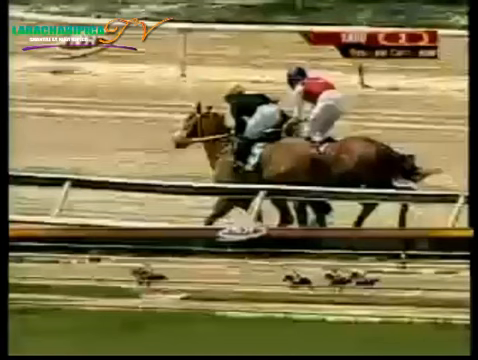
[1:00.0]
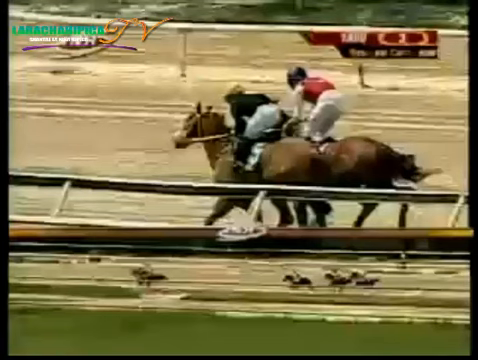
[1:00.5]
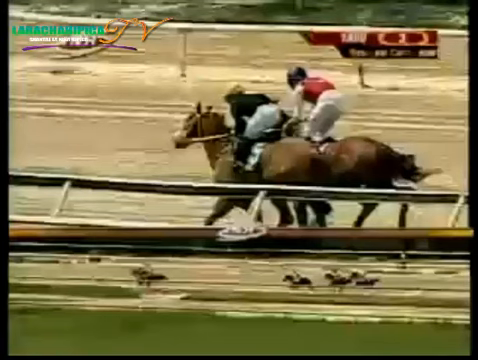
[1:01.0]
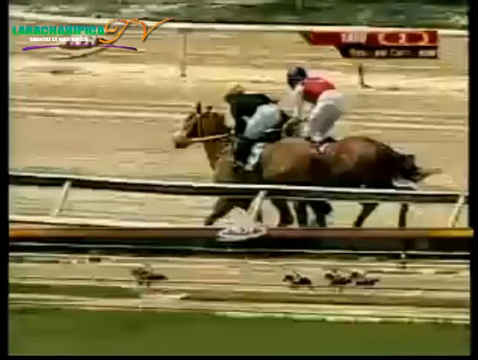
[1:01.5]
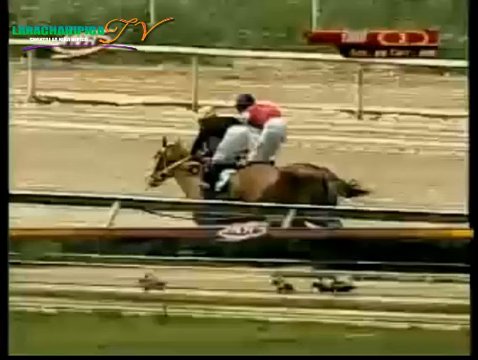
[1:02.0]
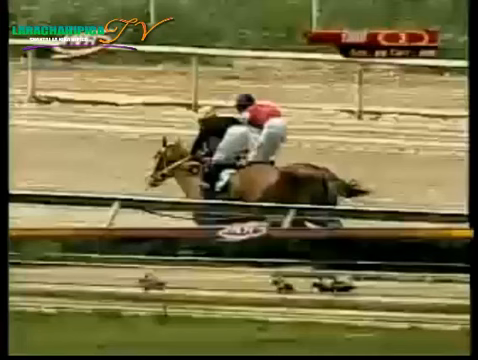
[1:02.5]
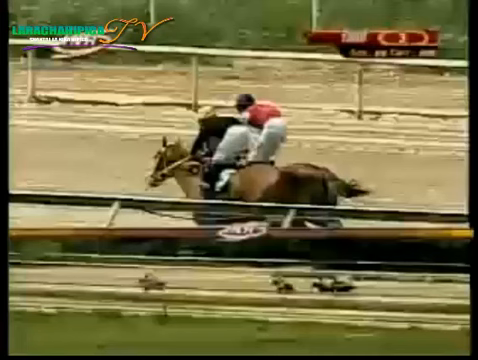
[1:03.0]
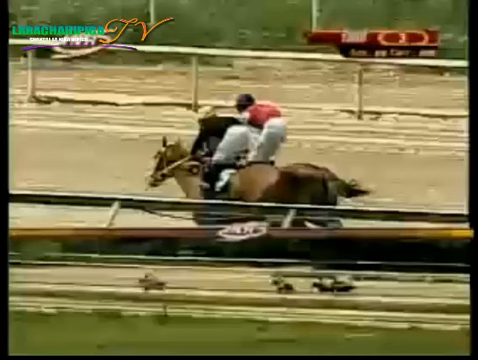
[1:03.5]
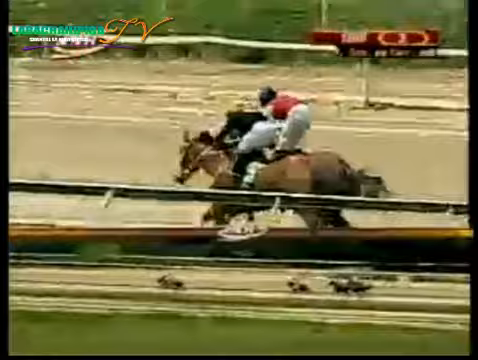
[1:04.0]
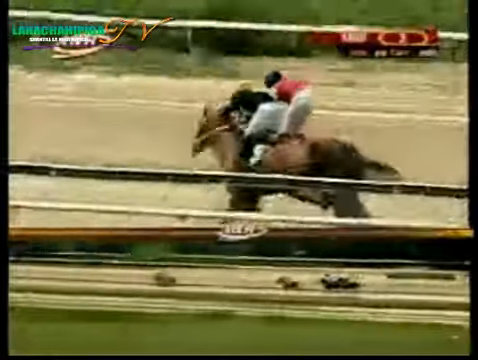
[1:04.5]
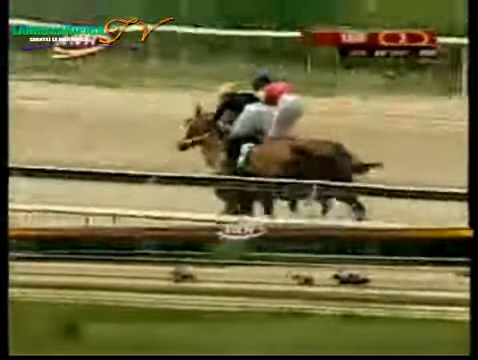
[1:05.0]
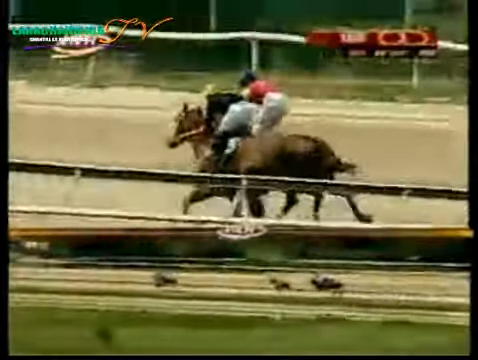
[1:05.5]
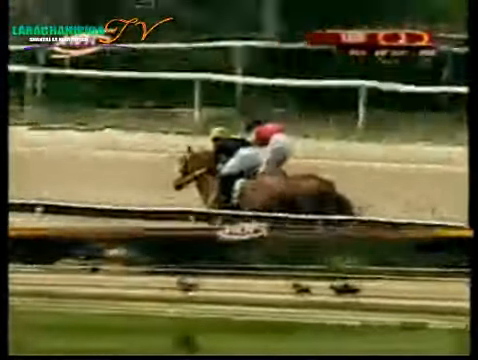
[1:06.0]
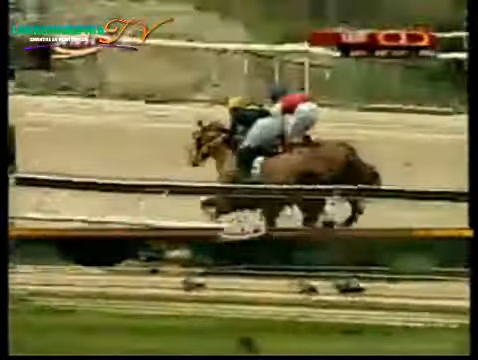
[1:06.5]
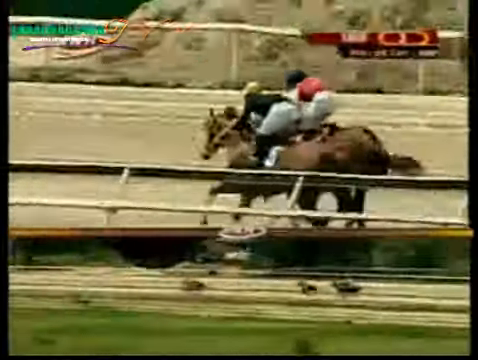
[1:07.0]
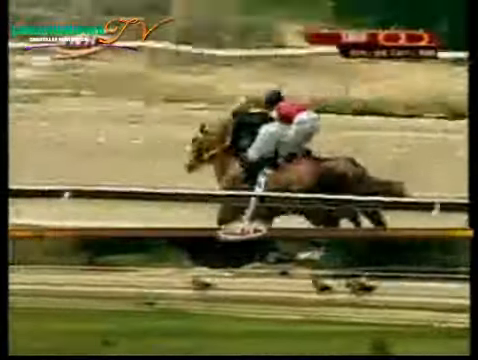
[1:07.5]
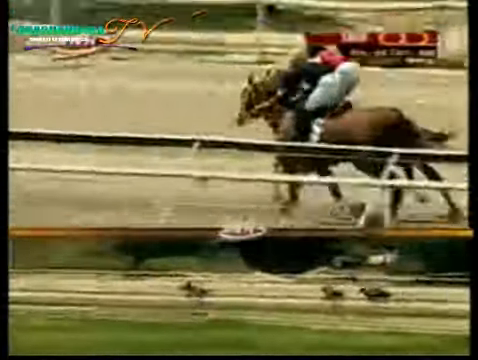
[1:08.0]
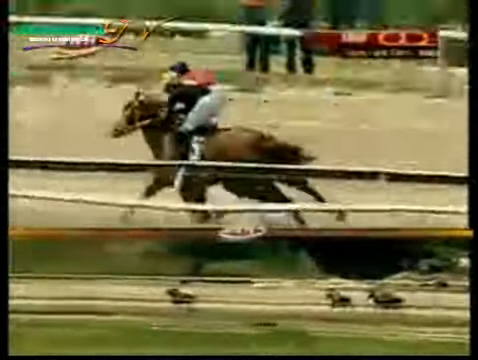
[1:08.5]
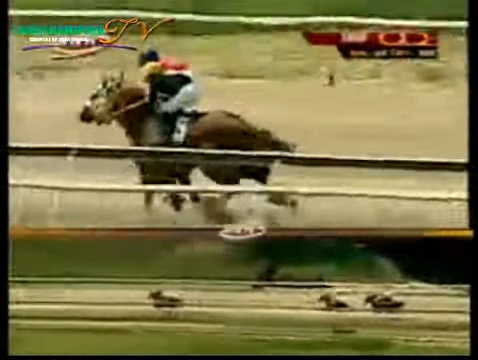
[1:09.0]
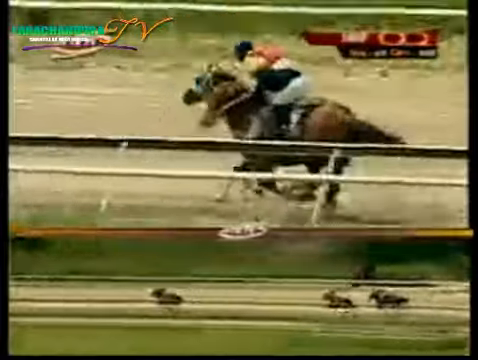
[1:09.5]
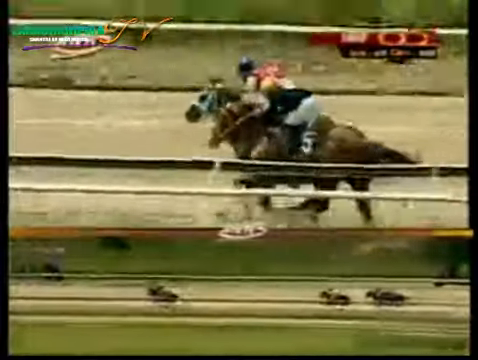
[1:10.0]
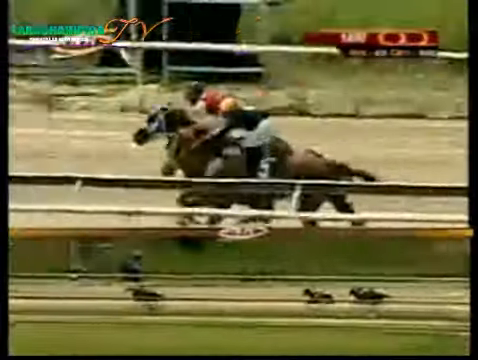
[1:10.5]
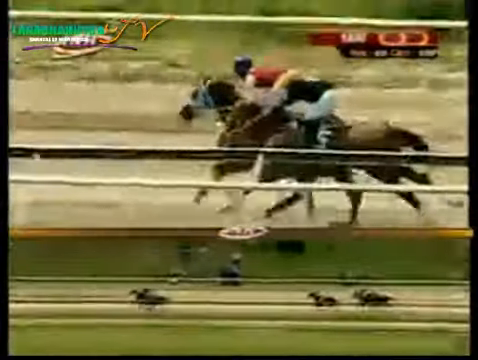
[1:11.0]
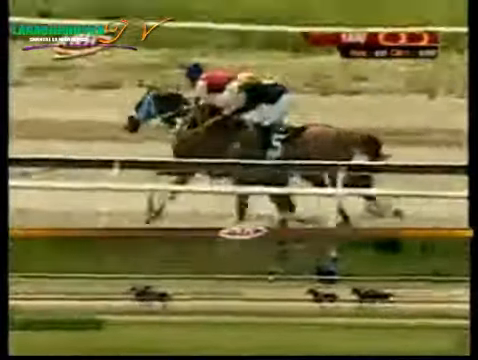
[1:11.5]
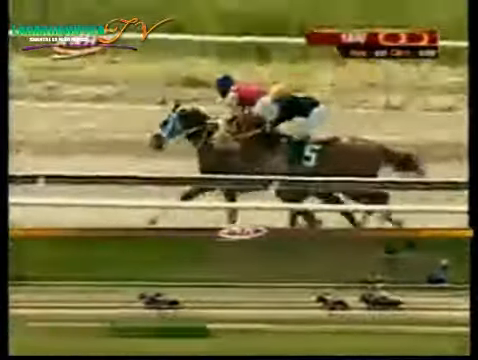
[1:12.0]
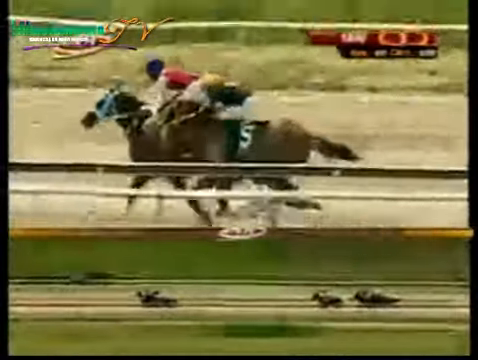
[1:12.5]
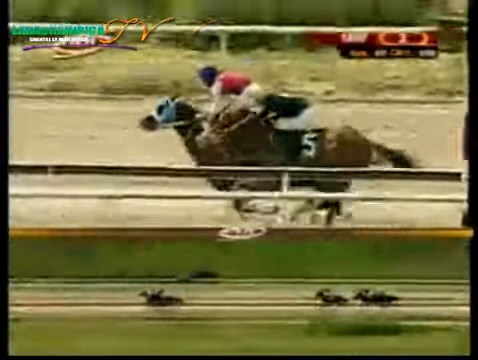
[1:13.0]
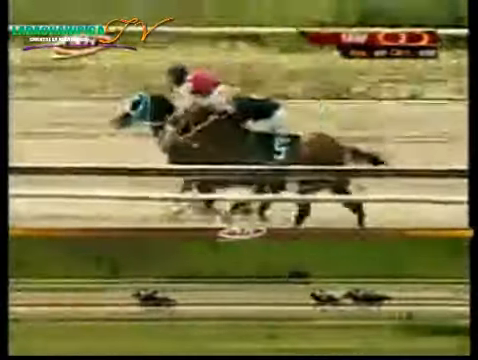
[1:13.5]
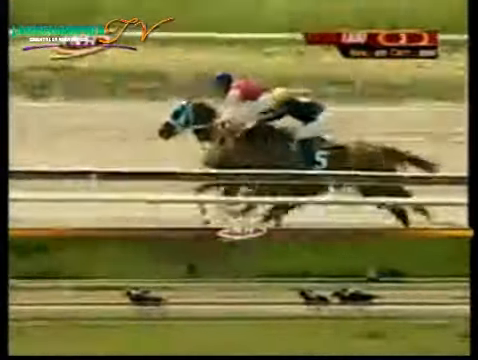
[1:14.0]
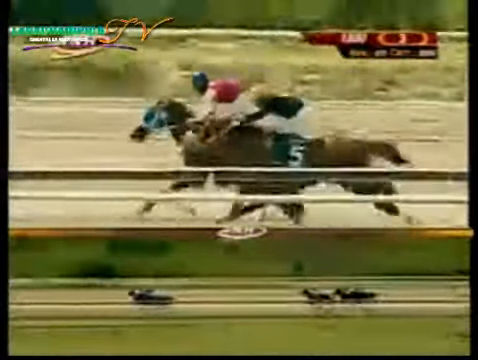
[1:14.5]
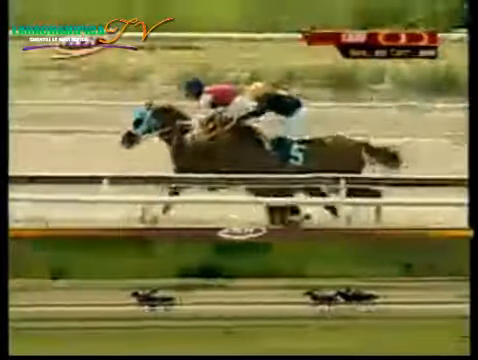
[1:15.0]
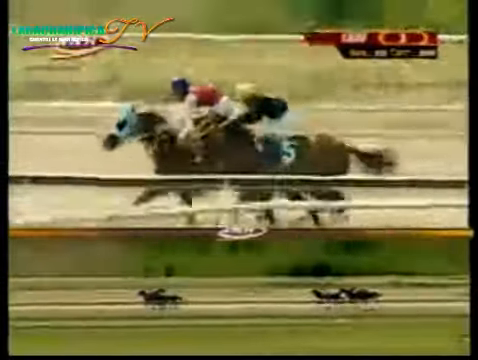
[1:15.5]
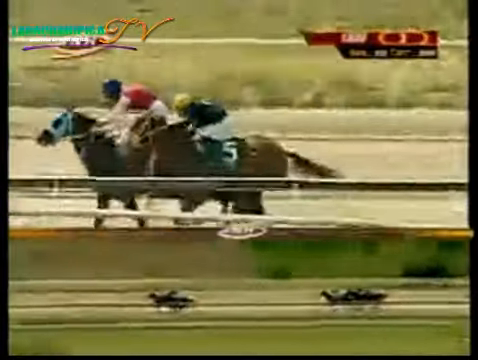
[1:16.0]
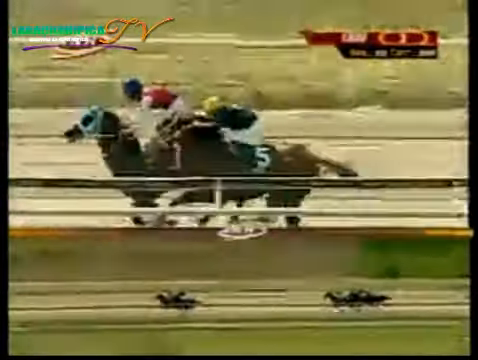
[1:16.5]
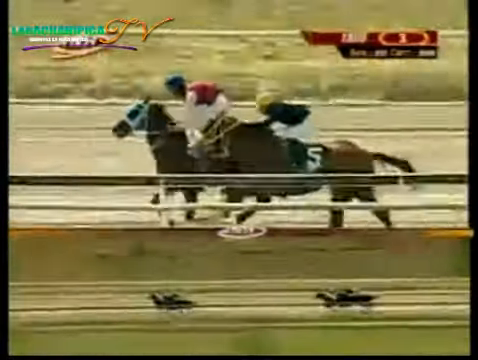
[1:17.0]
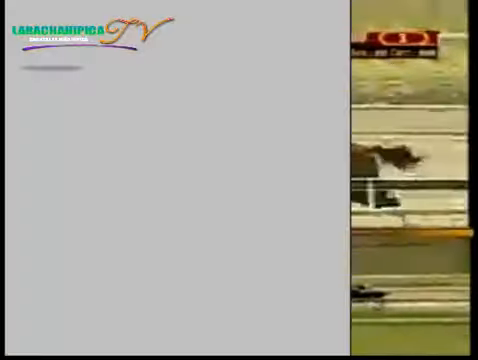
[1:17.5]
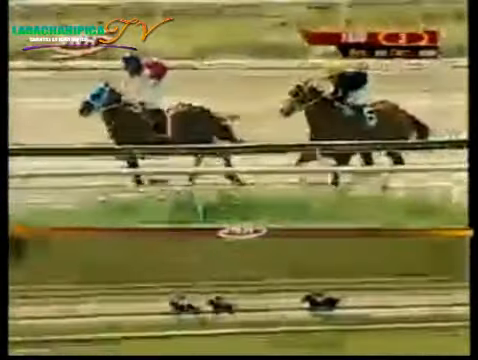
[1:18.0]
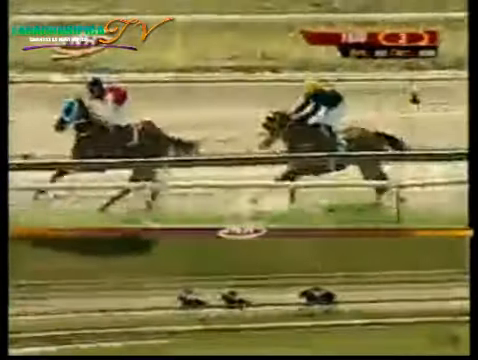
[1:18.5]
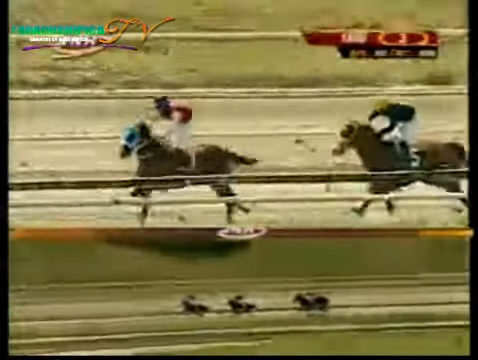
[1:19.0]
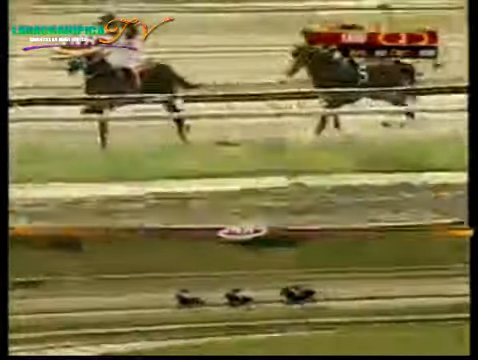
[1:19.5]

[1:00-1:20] The video pauses at first and appears to be buffering and struggling to load. Once it loads, it shows the two horses side by side, tied for first place, galloping very fast down what appears to be a road-based track with ground that looks cement-based. Horse number five is now in second place; the other horse, directly behind number five from this point of view, has a step on it. The rider in the pink shirt takes the lead, and toward the end that horse is shown leading by a good amount after picking up speed, making it the new horse in first place.